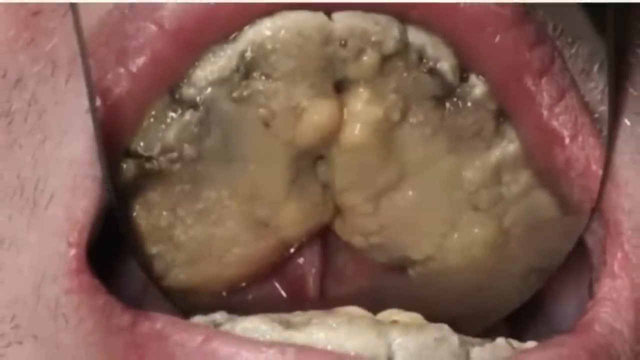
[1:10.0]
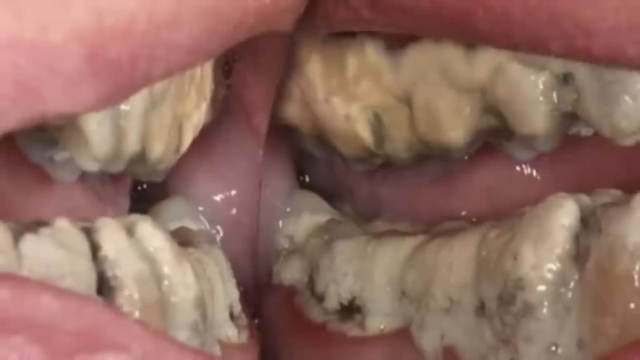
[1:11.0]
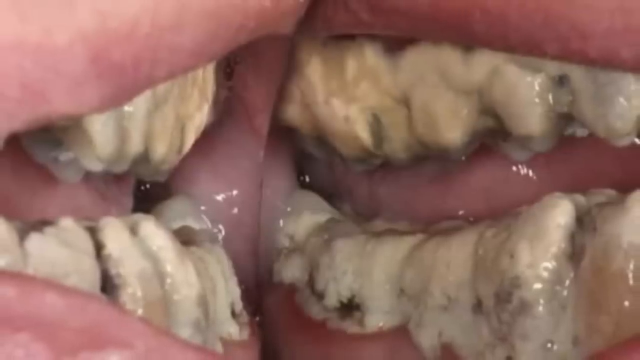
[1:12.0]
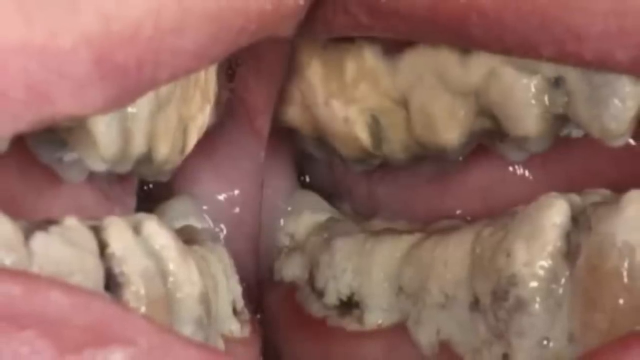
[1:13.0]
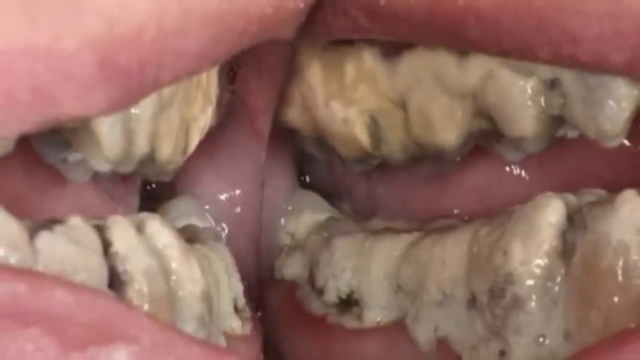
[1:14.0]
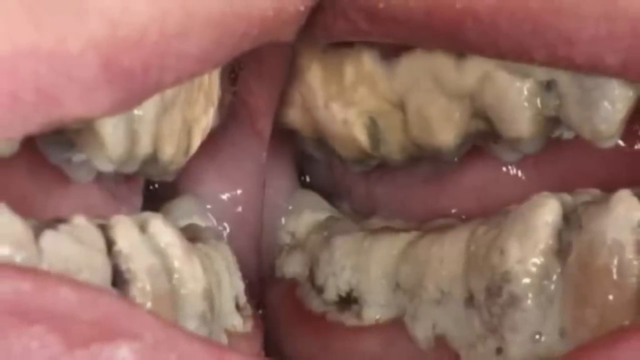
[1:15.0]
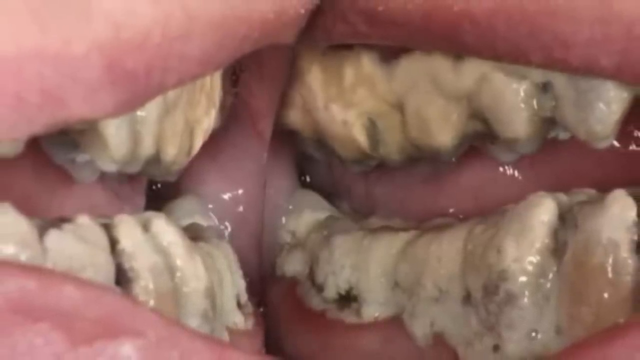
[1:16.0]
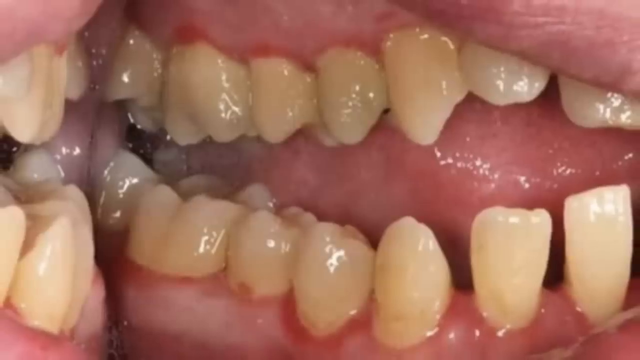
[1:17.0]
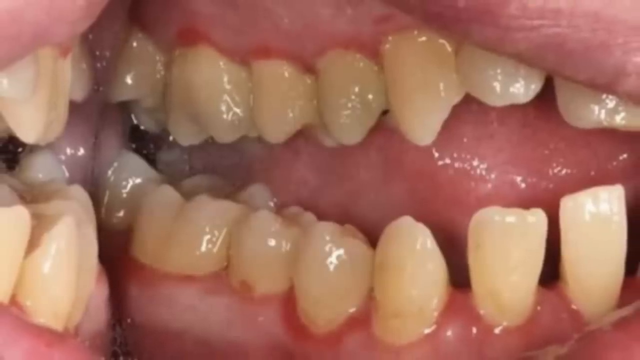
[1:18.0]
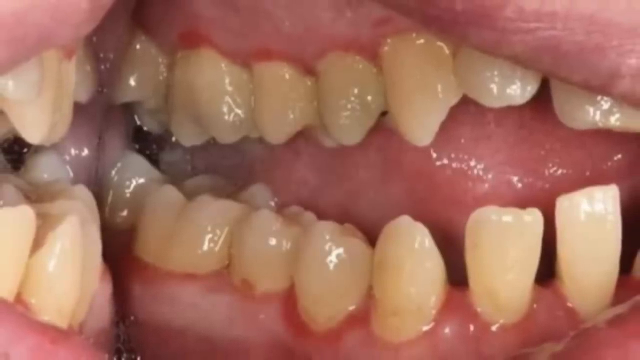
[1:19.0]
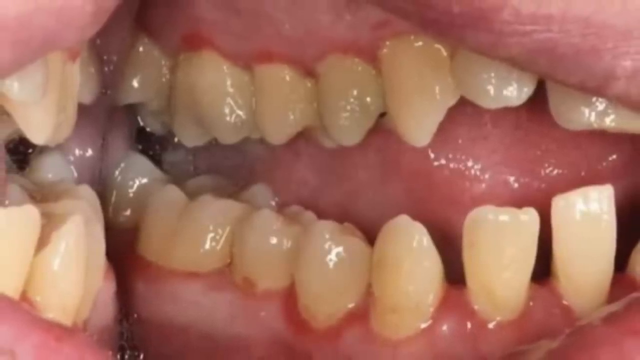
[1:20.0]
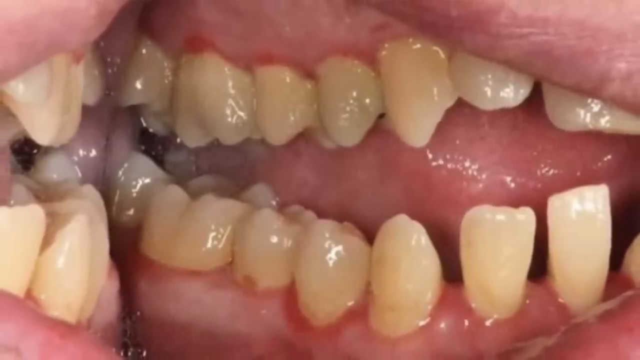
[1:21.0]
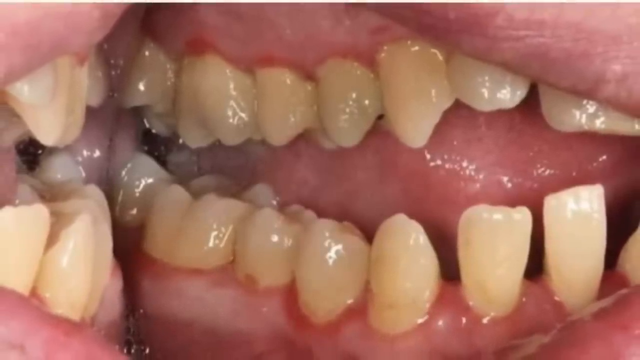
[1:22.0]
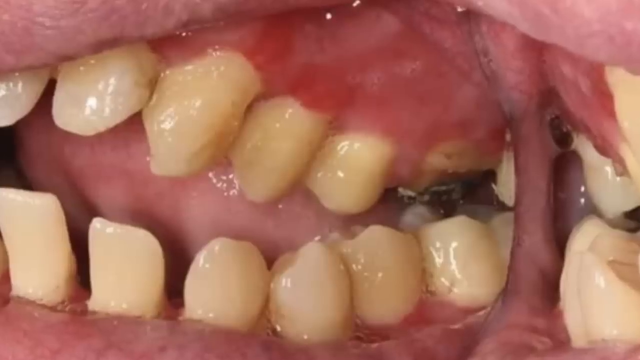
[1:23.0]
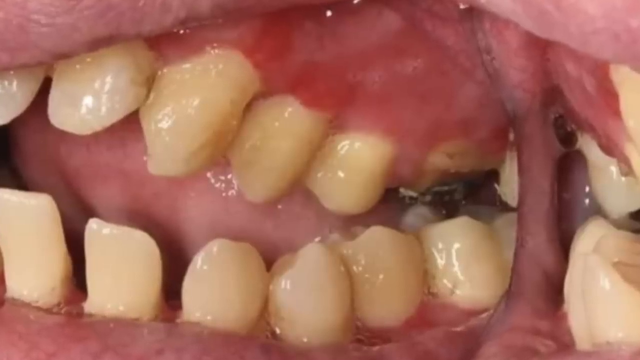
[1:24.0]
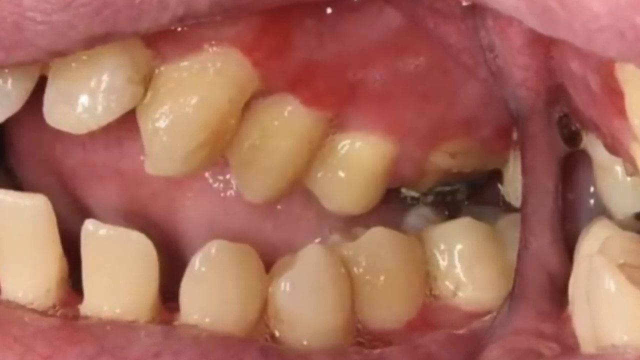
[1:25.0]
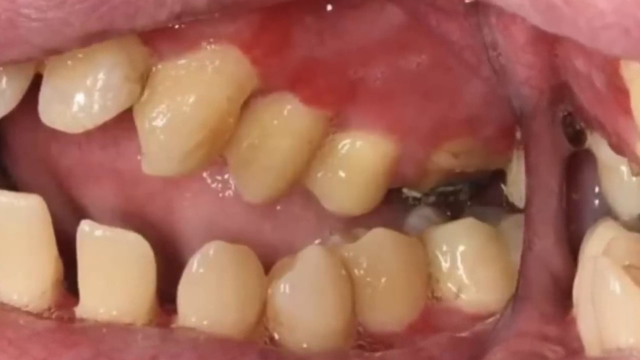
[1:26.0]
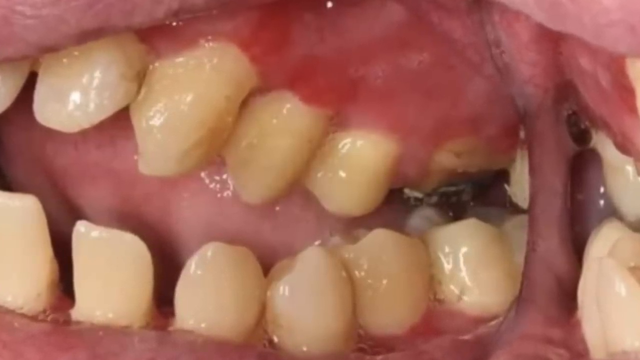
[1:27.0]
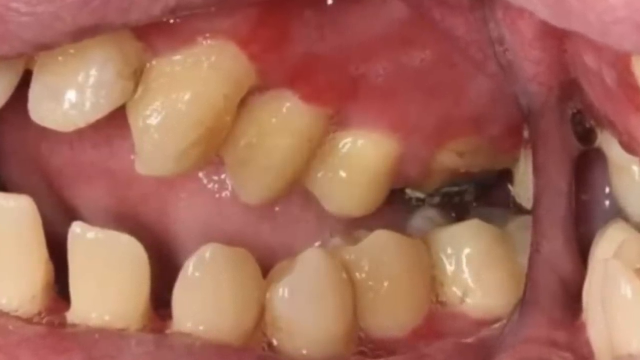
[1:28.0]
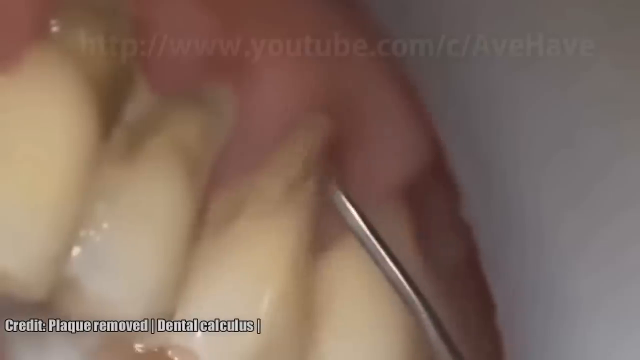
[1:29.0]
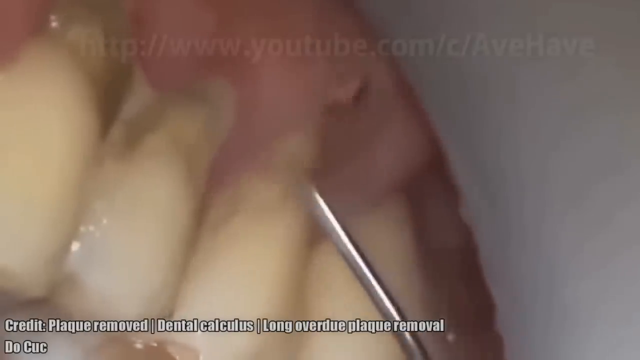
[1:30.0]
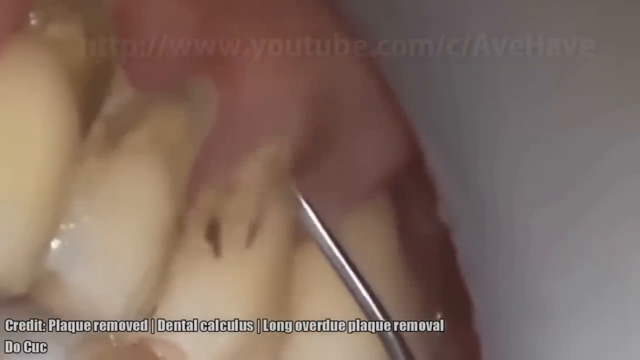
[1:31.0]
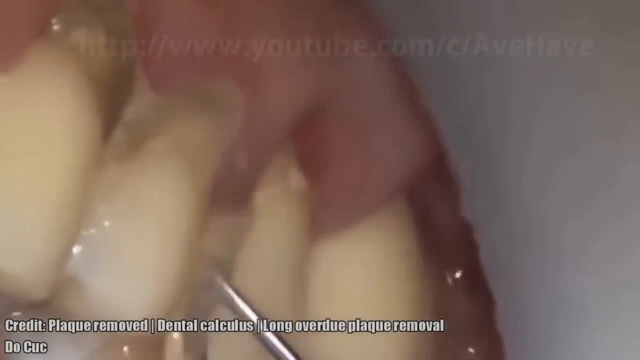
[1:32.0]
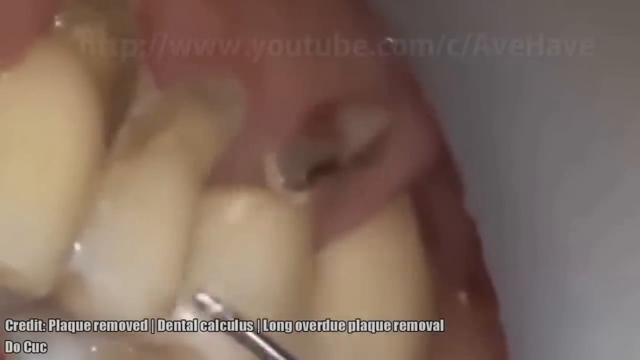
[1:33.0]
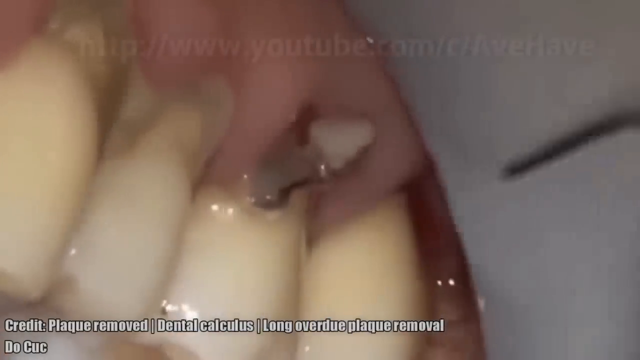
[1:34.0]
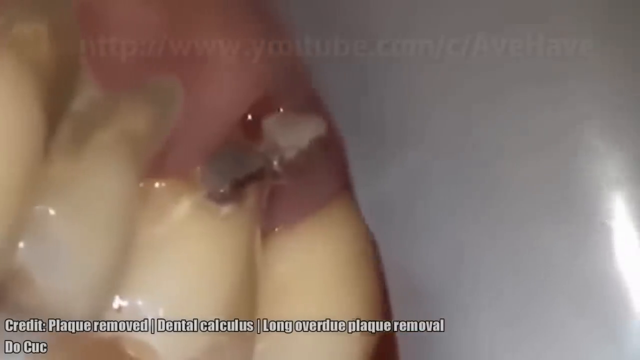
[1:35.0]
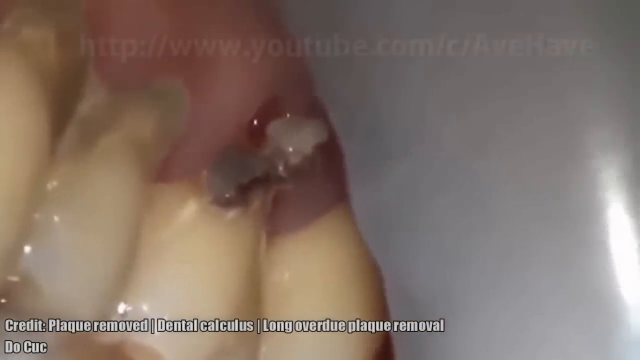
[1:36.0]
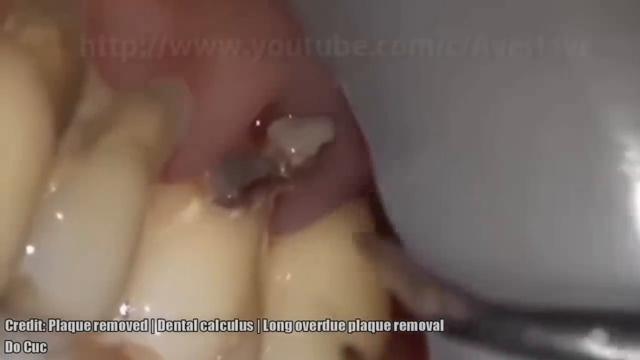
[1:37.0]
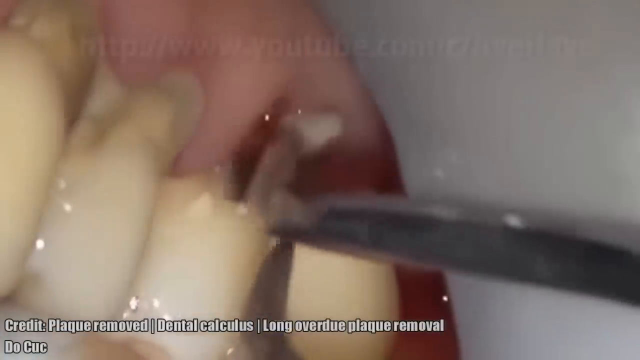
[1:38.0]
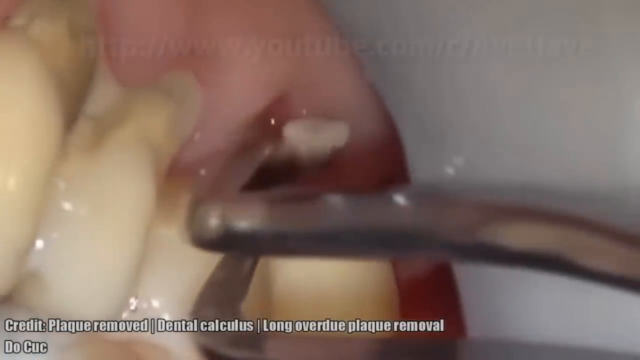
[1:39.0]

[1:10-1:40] An image shows a person's bottom teeth and the lower part of the mouth underneath the tongue, where tartar and plaque have encased the bottom of the mouth. Another person's teeth follow, where individual teeth cannot be identified and there is just a large strip of tartar over them. In these extreme cases the tartar seems more discolored near the gum line and between the teeth. A picture then shows one of the mouths that had a large amount of tartar after cleaning: all the tartar is gone, leaving large gaps between the teeth where it had been, and the gum line is red and inflamed. Another image of the aftermath of a cleaning shows cavities and missing teeth.